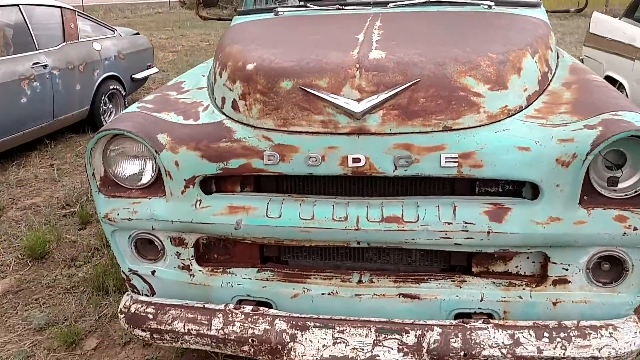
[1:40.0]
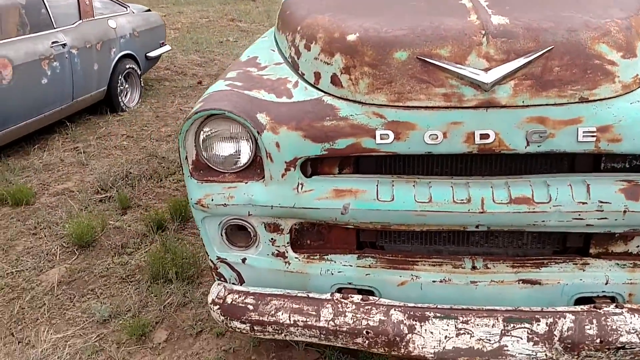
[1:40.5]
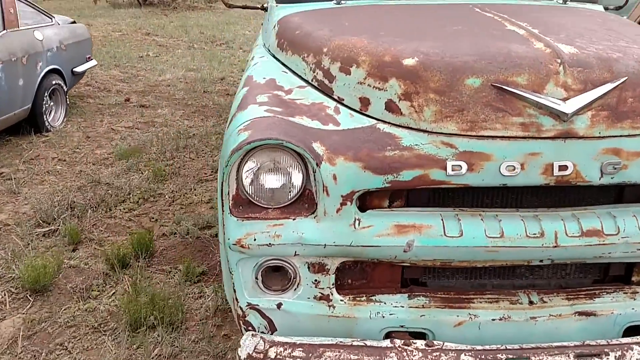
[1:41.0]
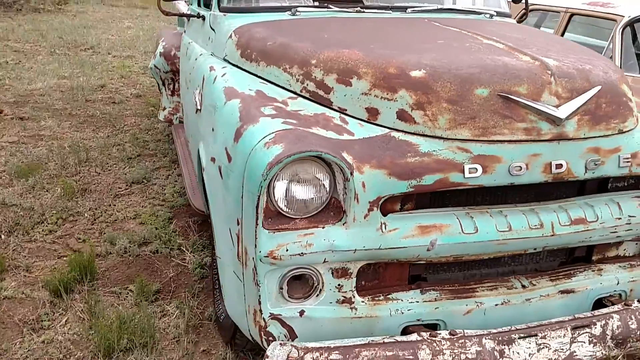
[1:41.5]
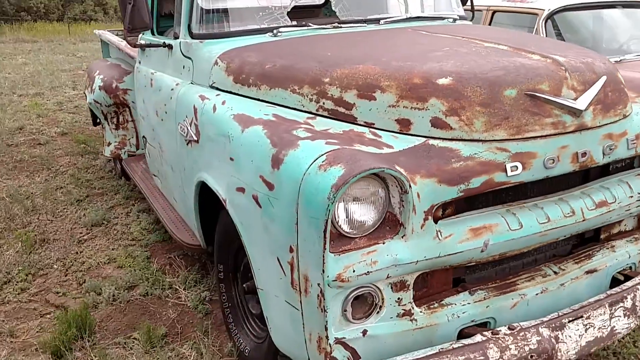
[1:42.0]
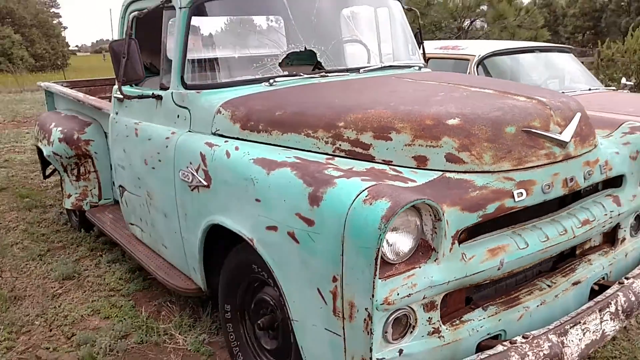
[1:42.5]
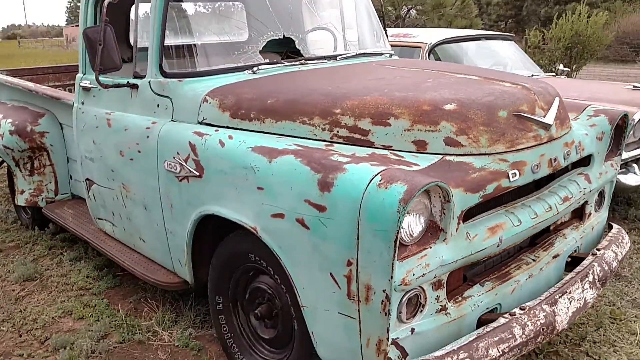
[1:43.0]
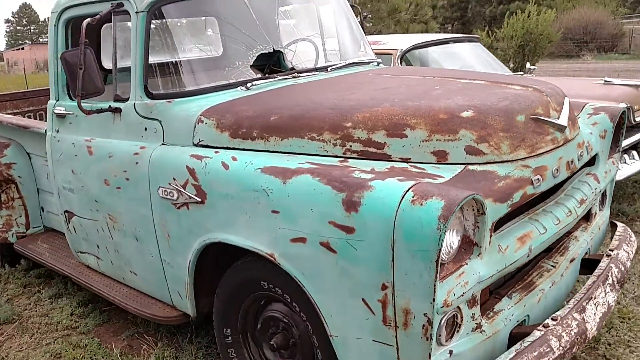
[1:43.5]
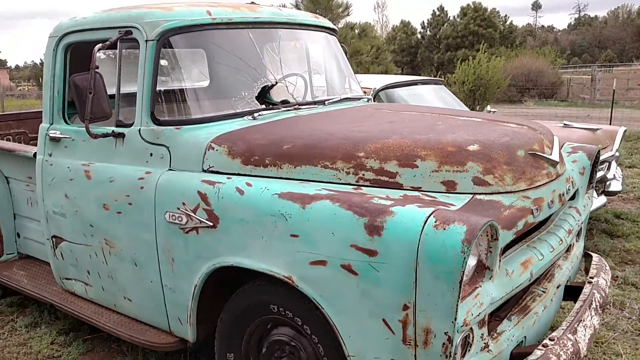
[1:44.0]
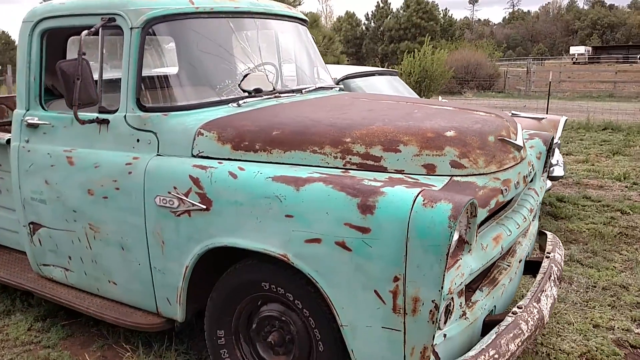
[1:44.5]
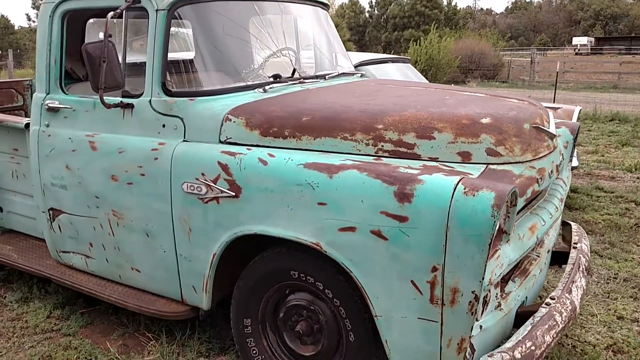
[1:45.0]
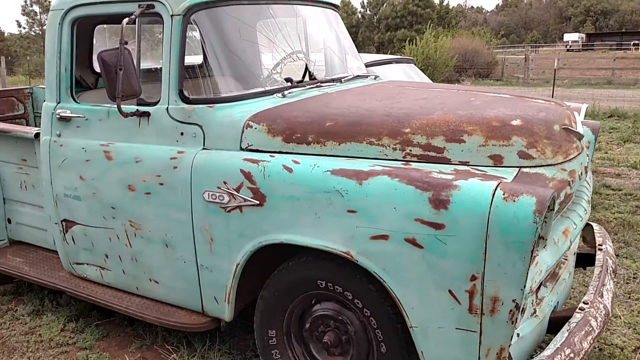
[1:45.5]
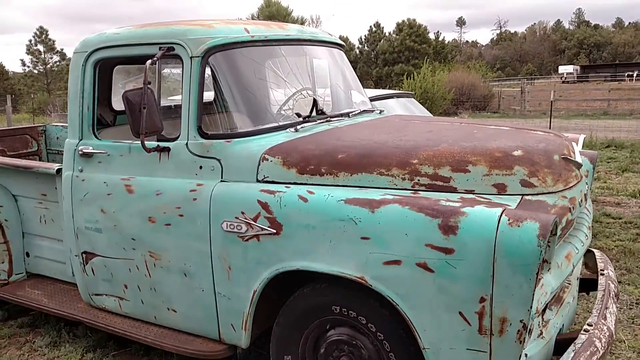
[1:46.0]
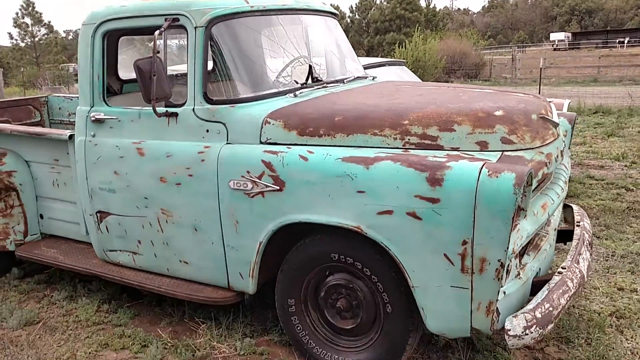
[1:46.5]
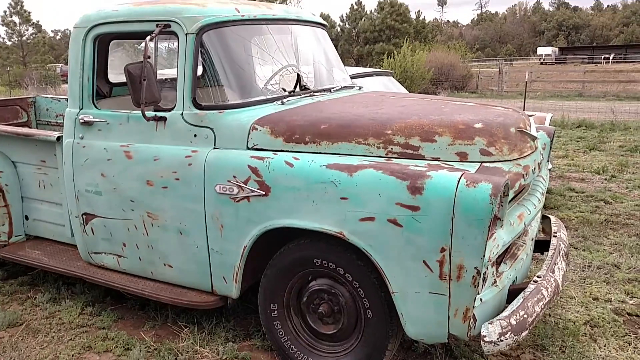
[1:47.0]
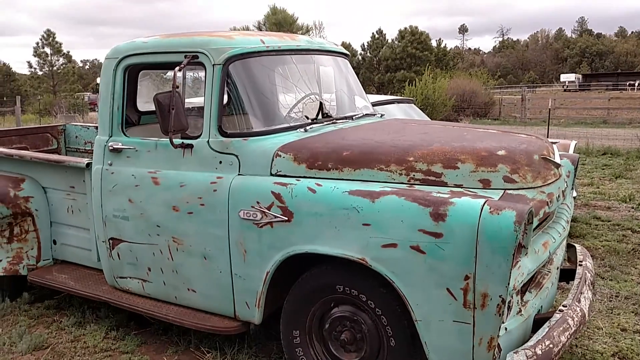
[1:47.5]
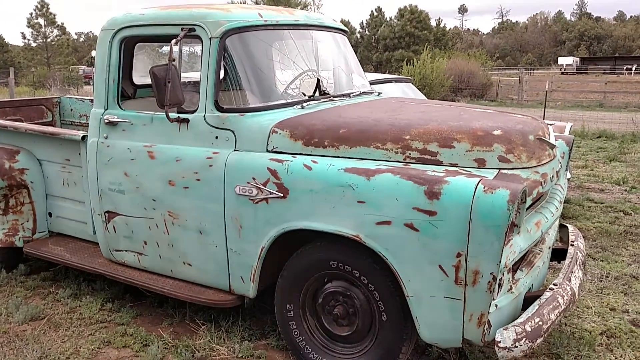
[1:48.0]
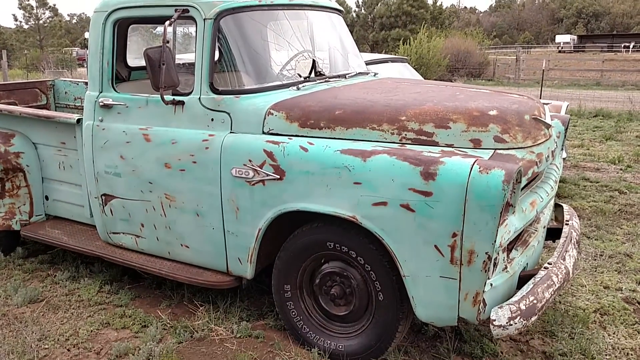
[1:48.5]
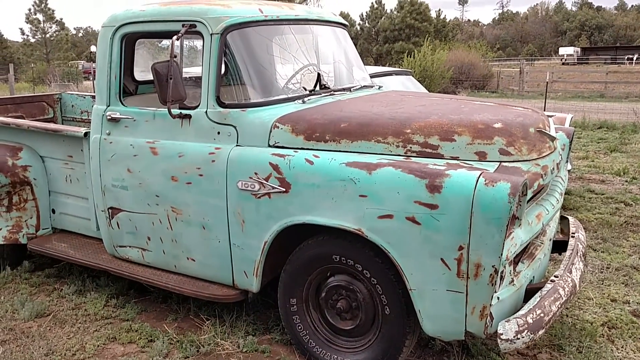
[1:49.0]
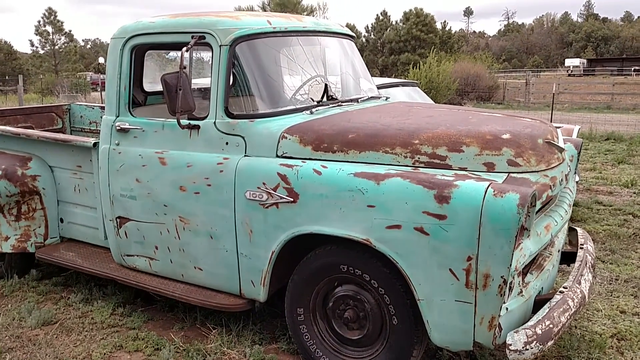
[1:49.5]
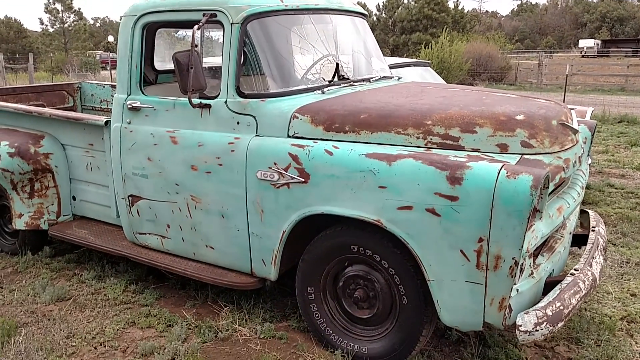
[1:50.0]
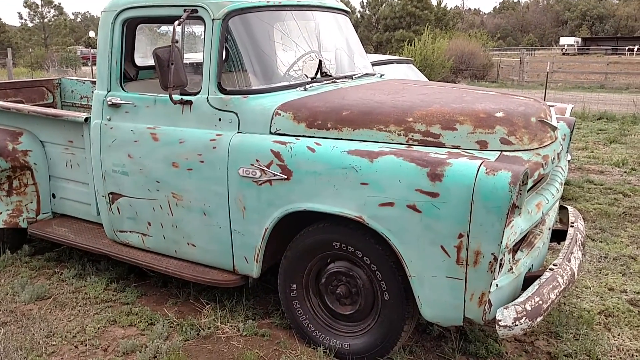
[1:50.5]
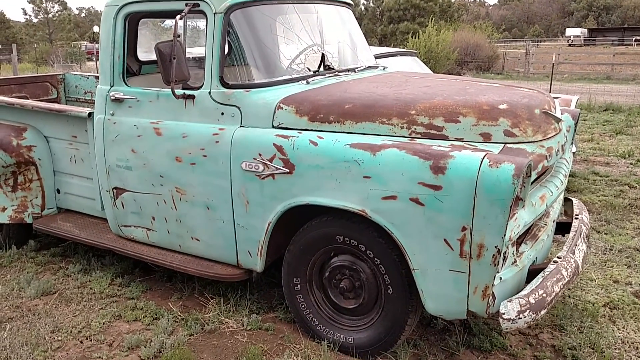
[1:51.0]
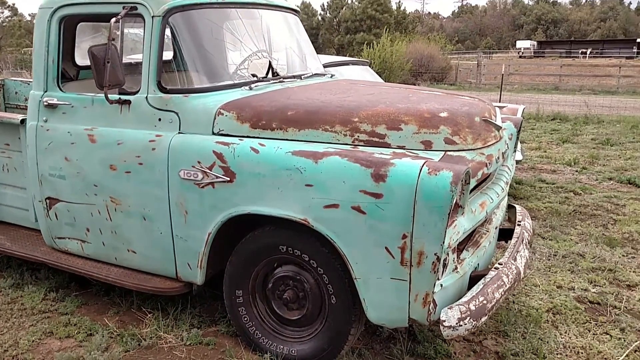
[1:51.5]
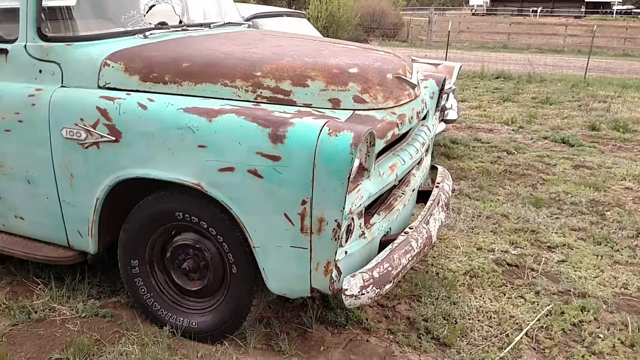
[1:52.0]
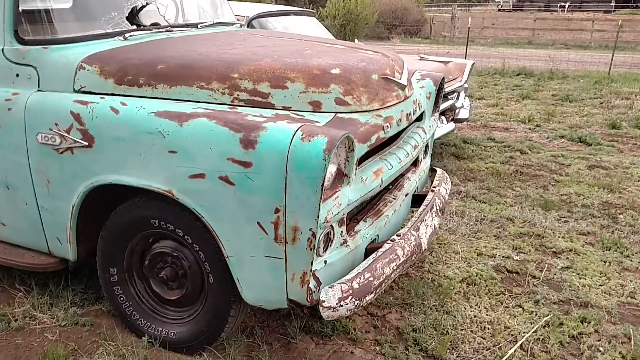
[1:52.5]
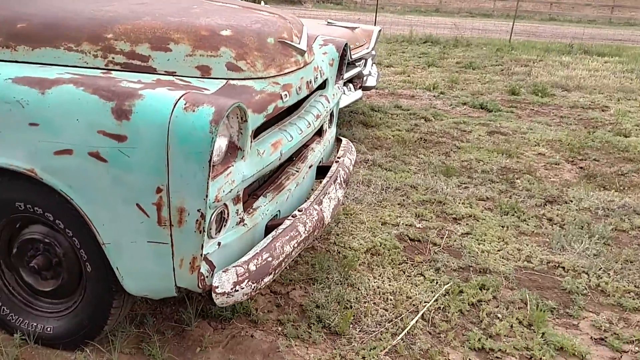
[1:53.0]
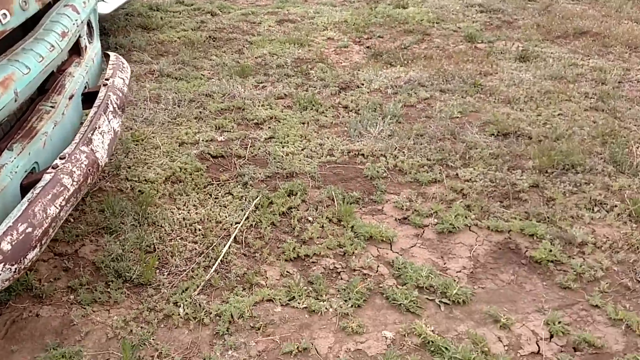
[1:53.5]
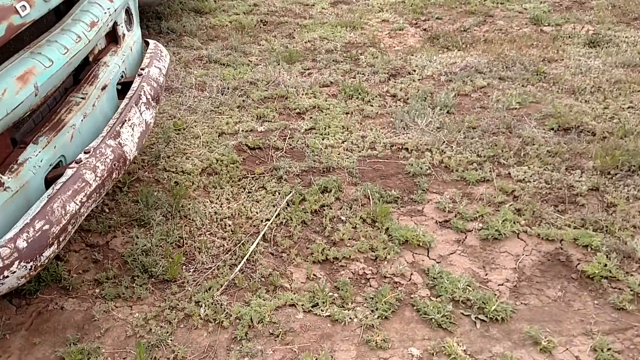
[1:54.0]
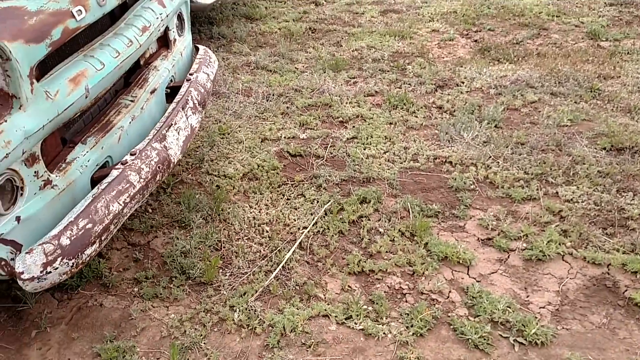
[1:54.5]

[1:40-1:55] Some old junkyard cars sit in some sort of grassy field; they are very old, with scratched-up bodies and frames. The focus is on a Dodge pickup whose color is completely faded, now mostly white, with a lot of brown marks and scuffs and bumps and dents all over it. A silver insignia is on the front, along with "Dodge" in silver letters. The camera pans to the left and circles around to the truck's right side, which is on the left of the frame, and hovers there for a moment, showing that the truck is severely damaged, old and broken down in this field. In the backdrop are some fences, lots of grass, lots of trees and bushes, and a forest. The camera shakes for a little while and then pans back to the right.